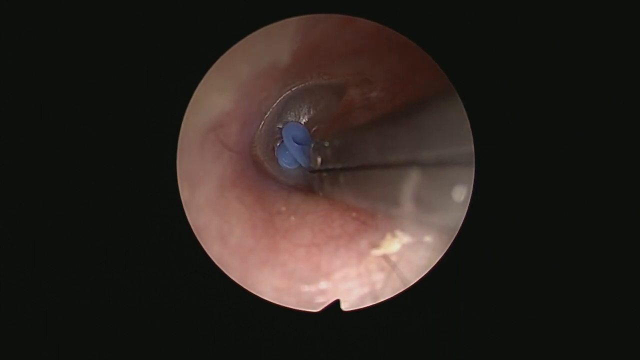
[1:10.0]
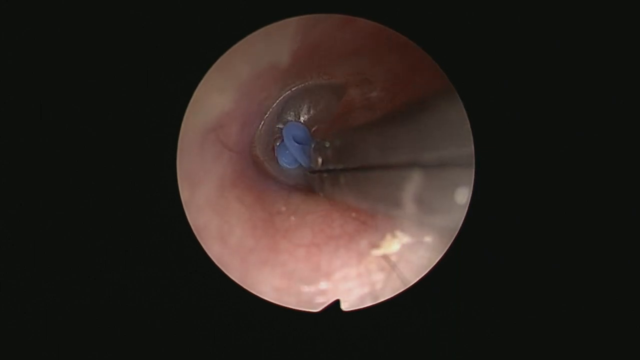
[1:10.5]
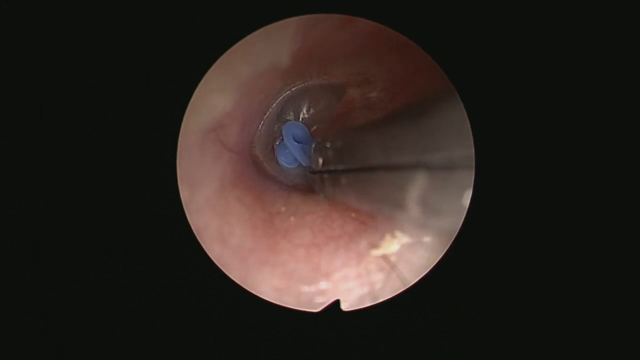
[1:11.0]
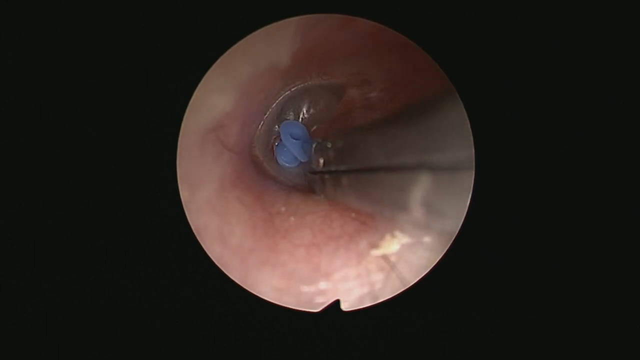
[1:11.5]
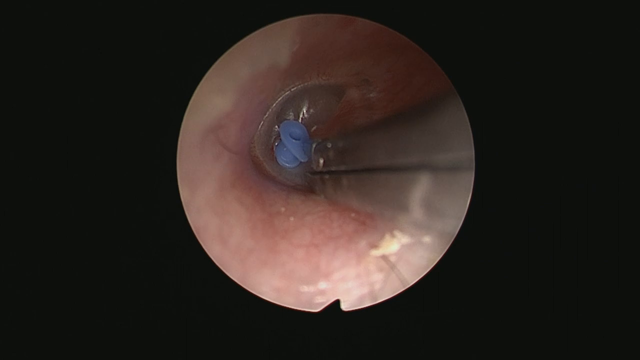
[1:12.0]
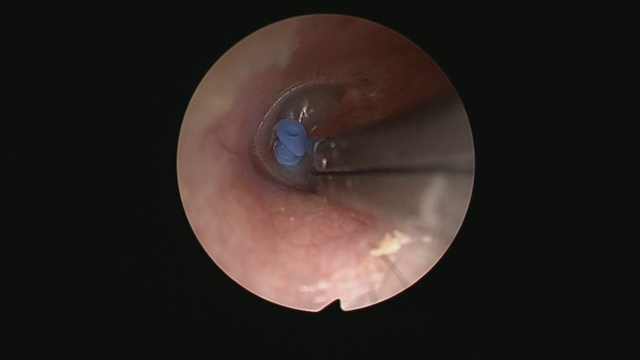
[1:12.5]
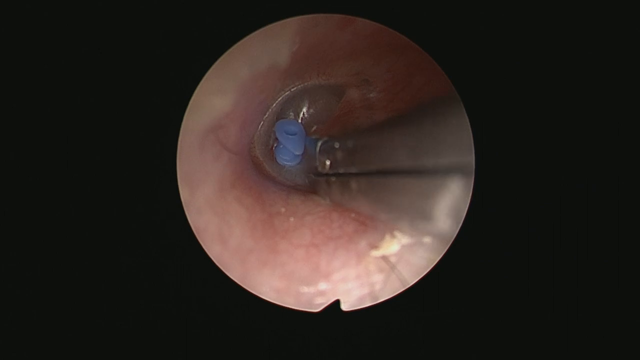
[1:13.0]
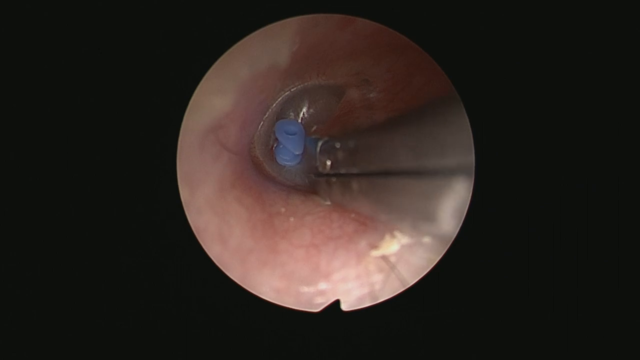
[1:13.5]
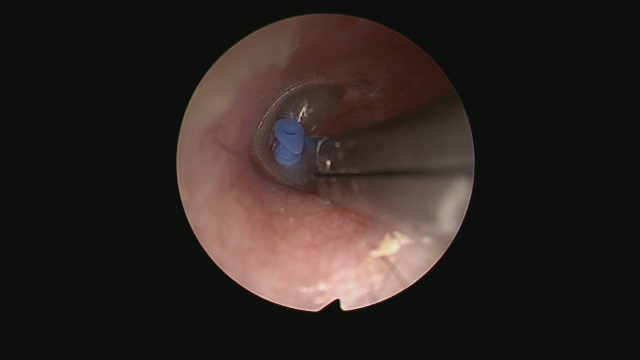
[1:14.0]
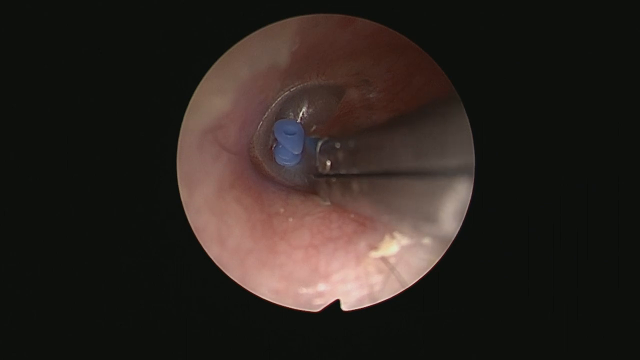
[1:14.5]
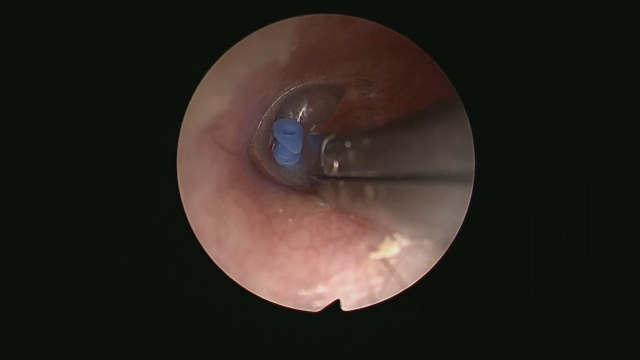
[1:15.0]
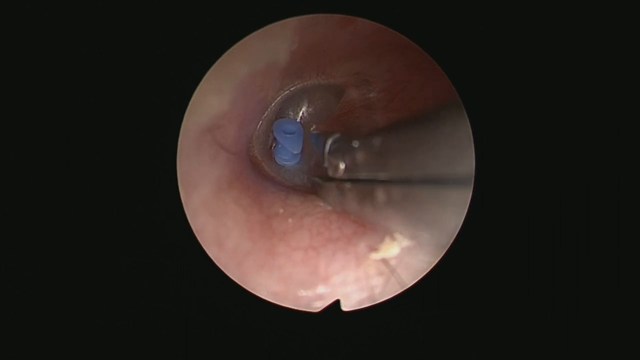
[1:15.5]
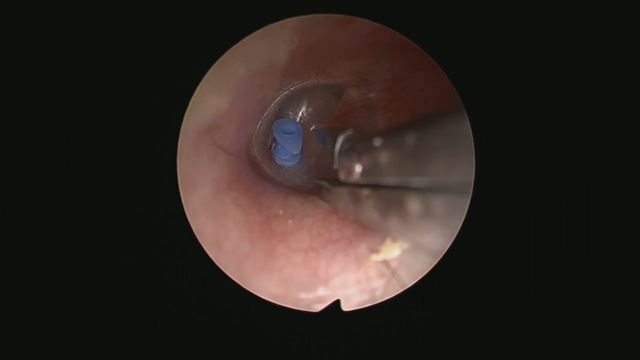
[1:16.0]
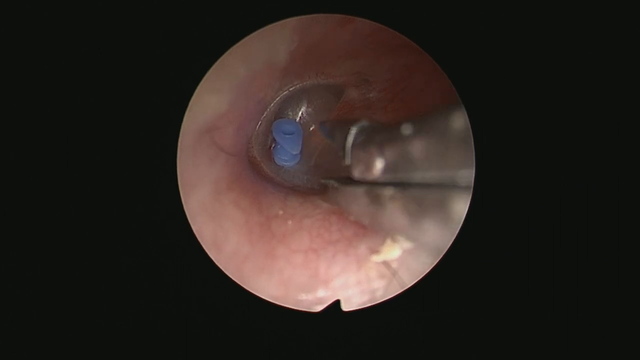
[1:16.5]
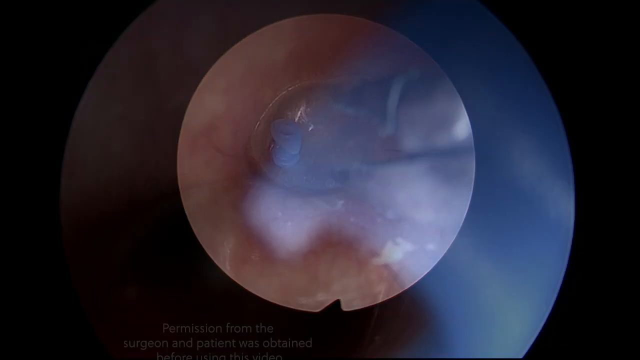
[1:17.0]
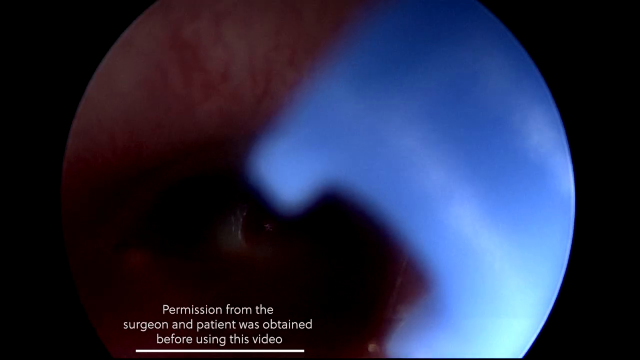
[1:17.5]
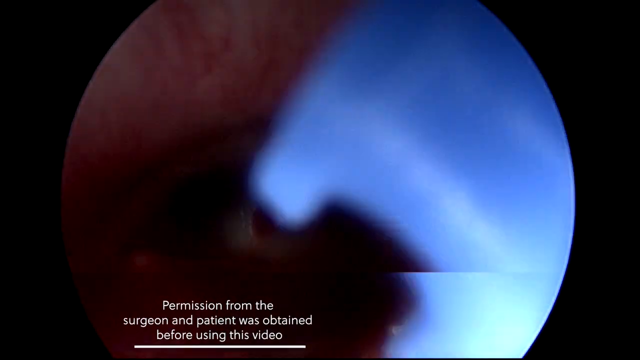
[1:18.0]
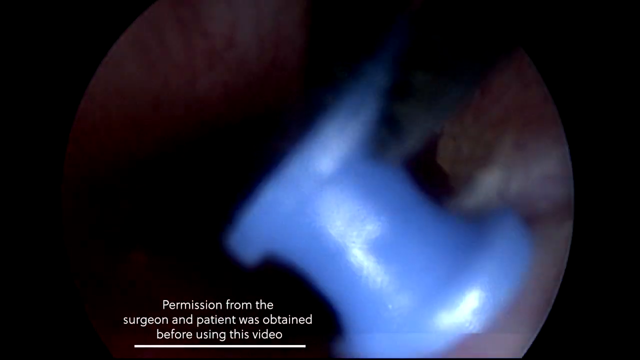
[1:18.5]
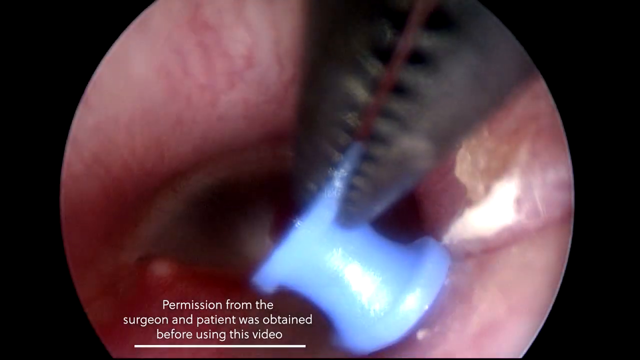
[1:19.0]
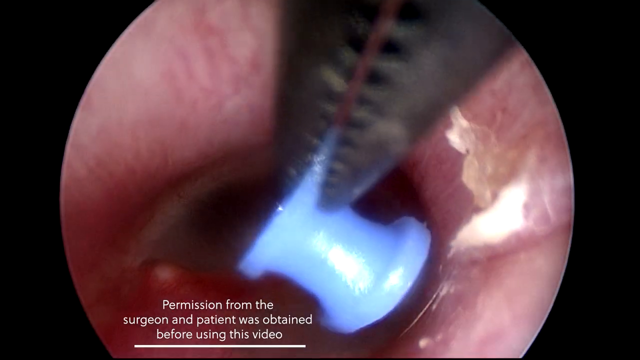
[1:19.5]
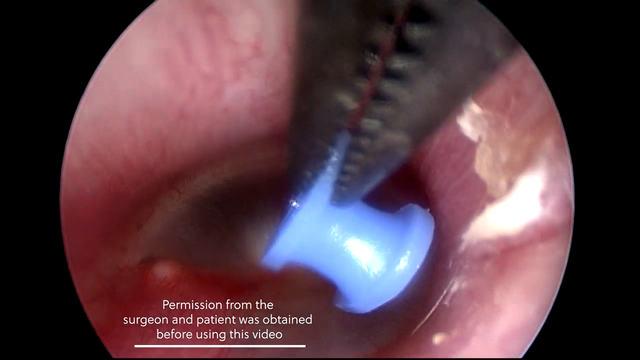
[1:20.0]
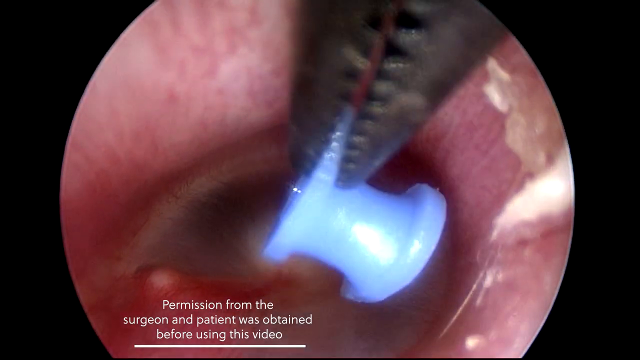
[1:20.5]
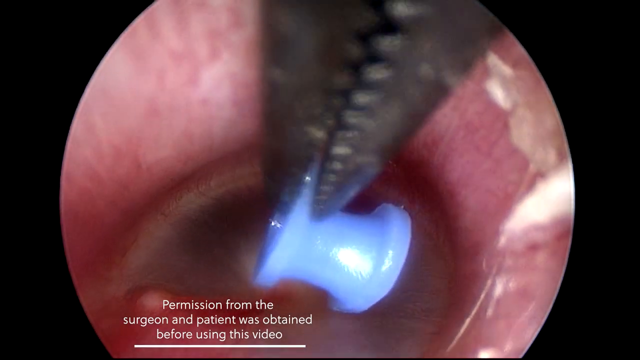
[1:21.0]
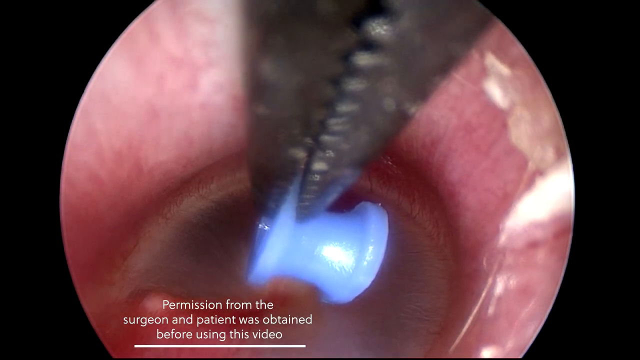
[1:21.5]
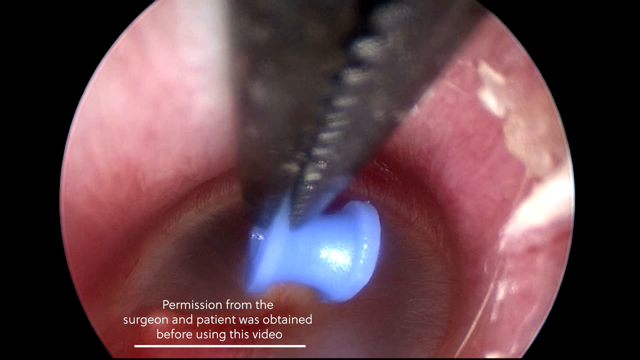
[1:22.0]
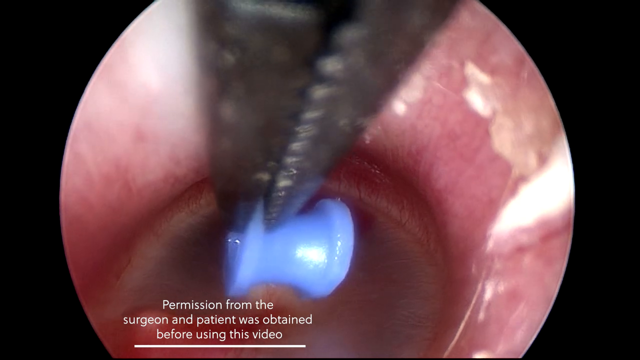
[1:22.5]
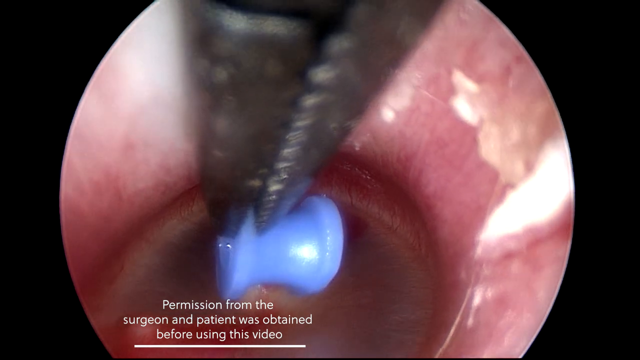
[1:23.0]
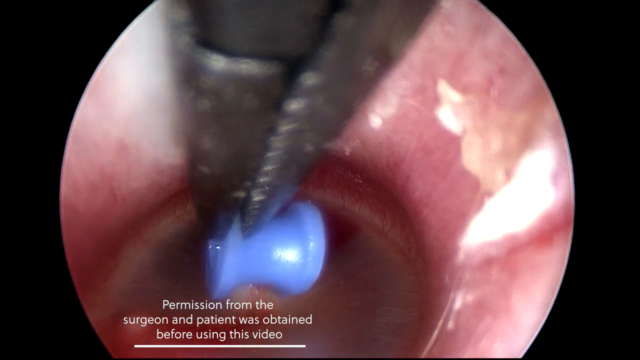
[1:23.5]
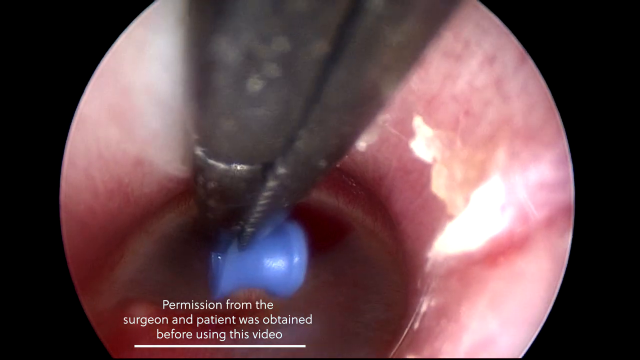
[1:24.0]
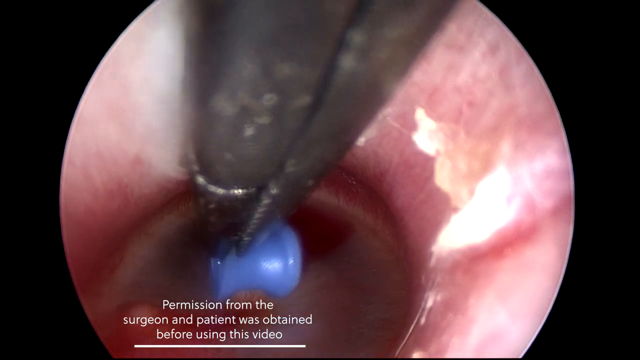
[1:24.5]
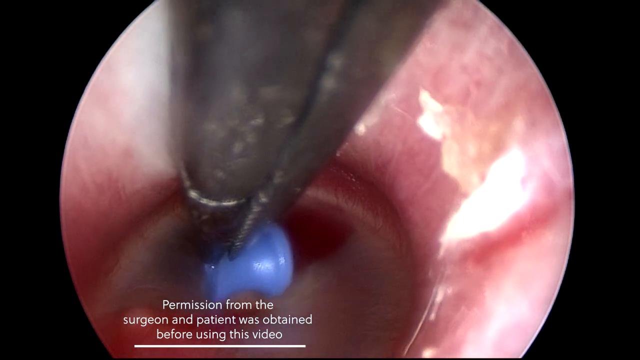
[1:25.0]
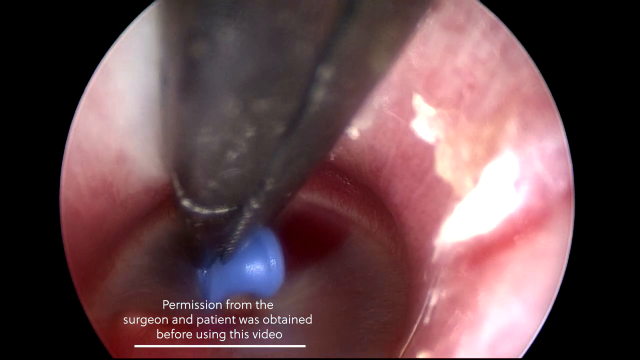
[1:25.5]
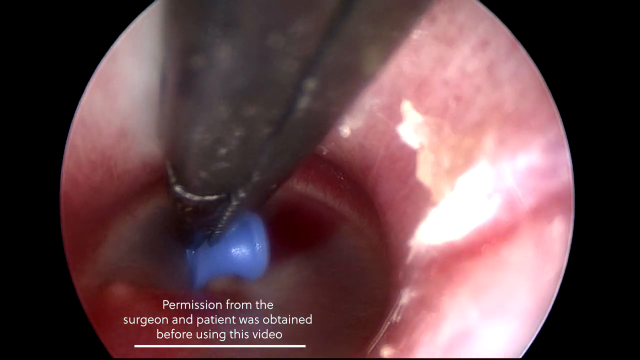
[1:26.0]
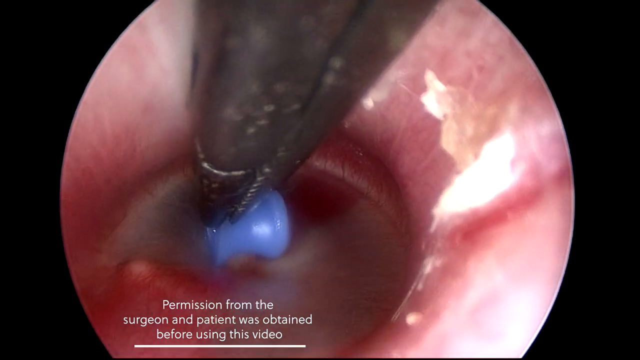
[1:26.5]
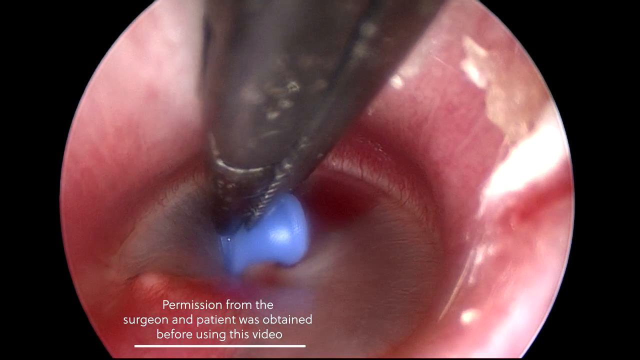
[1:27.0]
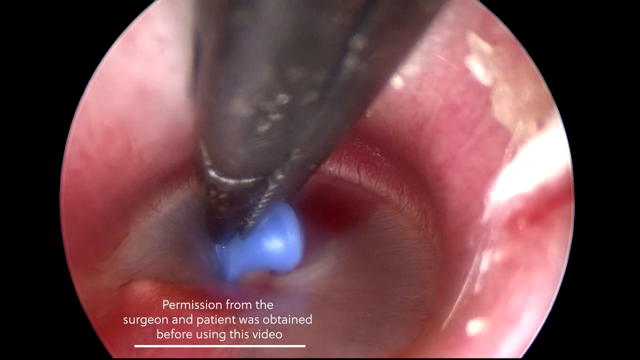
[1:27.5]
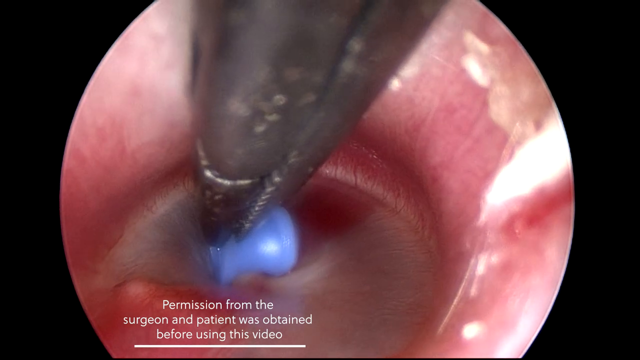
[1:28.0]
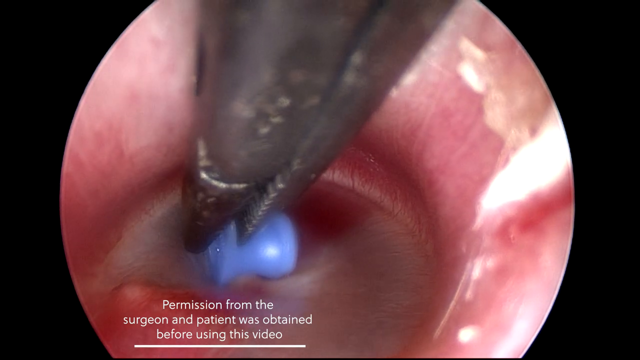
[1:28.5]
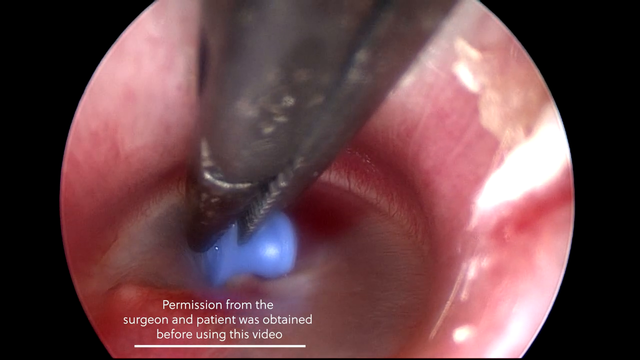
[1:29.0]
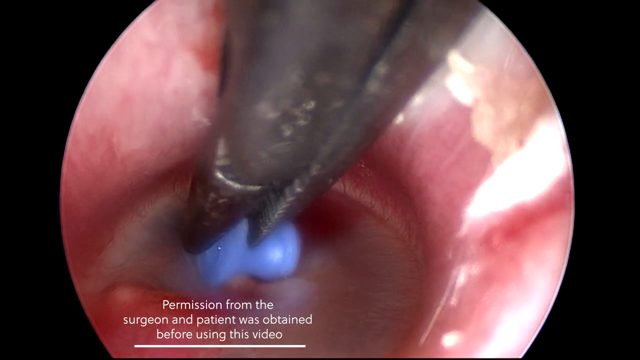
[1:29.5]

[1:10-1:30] The tool that has inserted the grommet into the ear reaches down to the little sack, where there is a hole it made. The tool is retracted, and text reads "permission from the surgeon and patient was obtained before using this video." A different view follows that at first almost looks like an eye inside the ear, but it shows the tool holding the grommet to insert it down the ear canal. The tool pushes the grommet into the sack and pulls out, giving a view deep into the ear cavity. The equipment is pulled out.